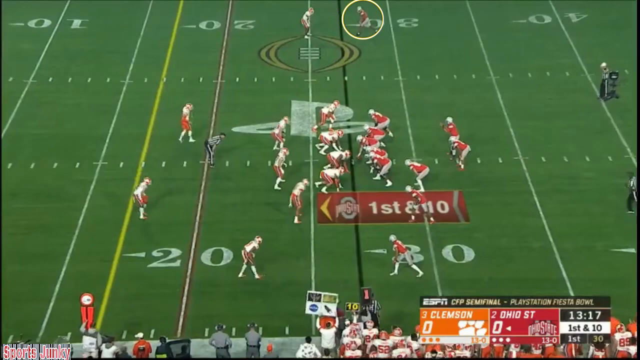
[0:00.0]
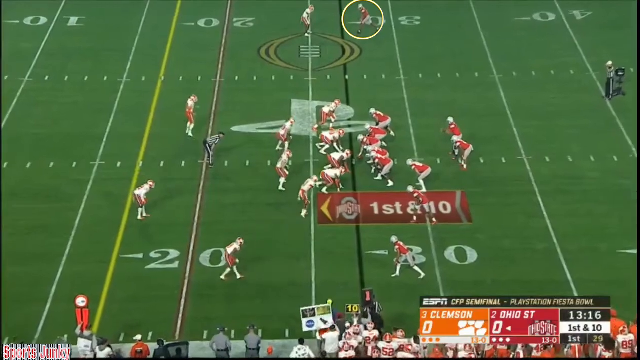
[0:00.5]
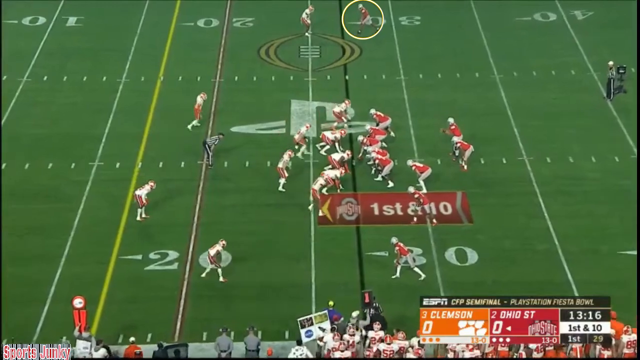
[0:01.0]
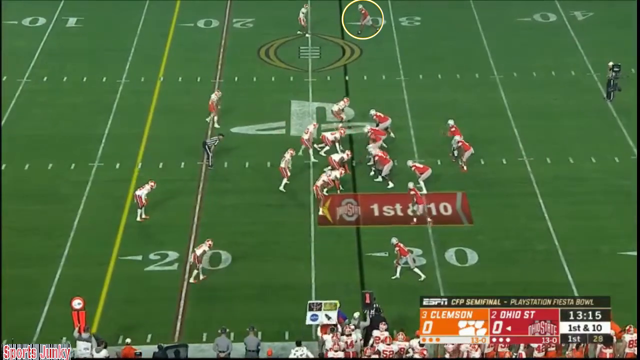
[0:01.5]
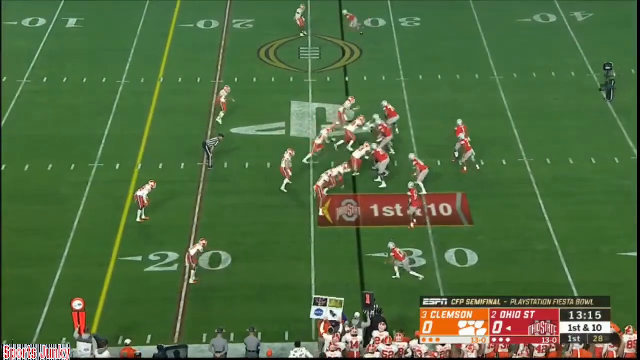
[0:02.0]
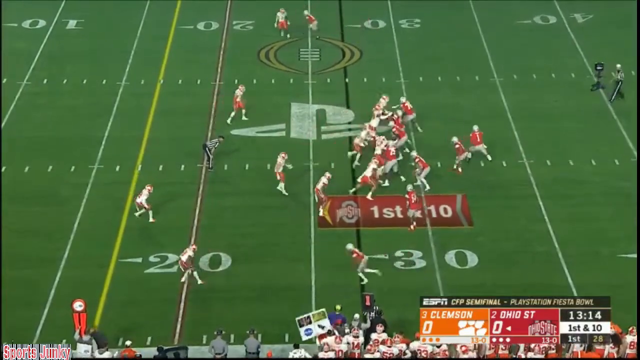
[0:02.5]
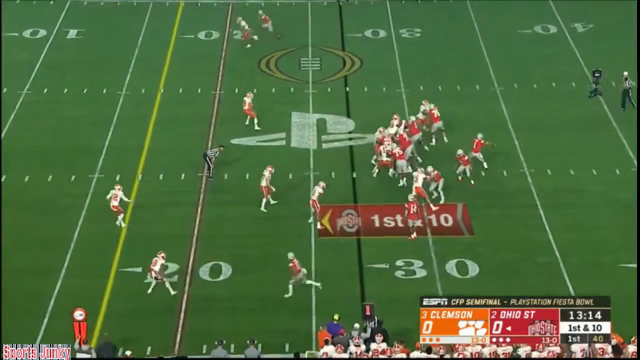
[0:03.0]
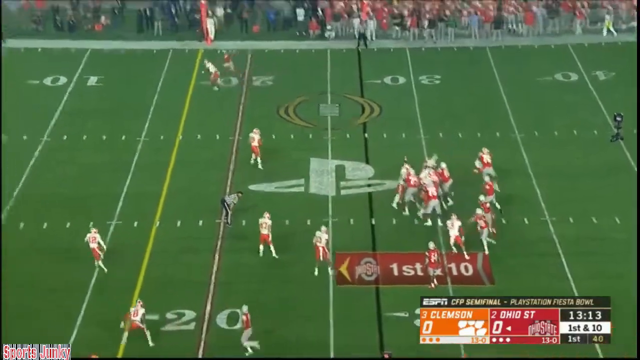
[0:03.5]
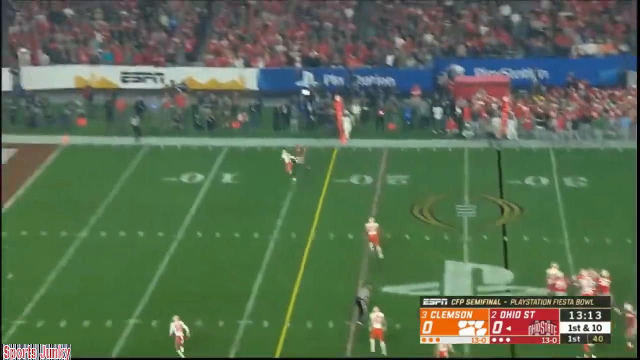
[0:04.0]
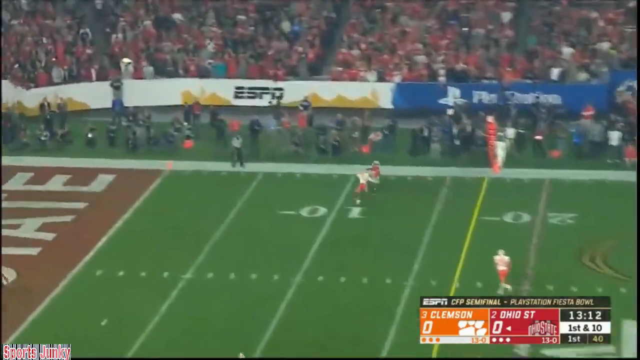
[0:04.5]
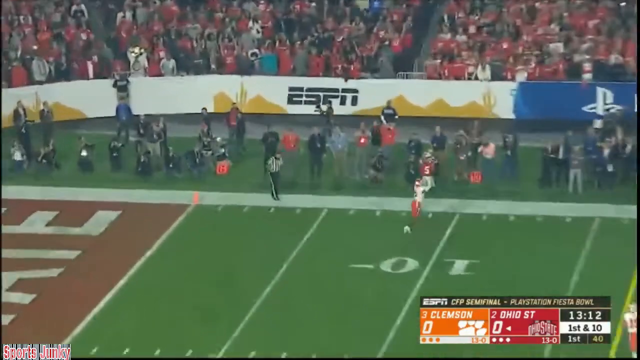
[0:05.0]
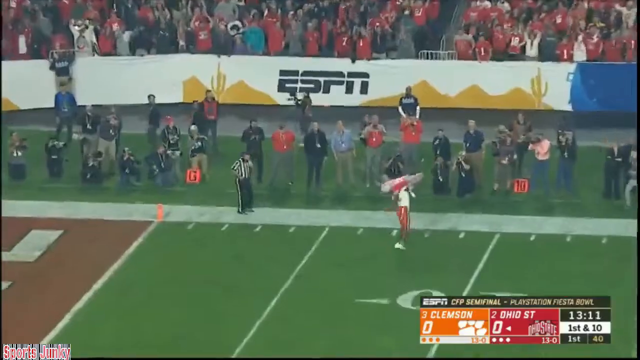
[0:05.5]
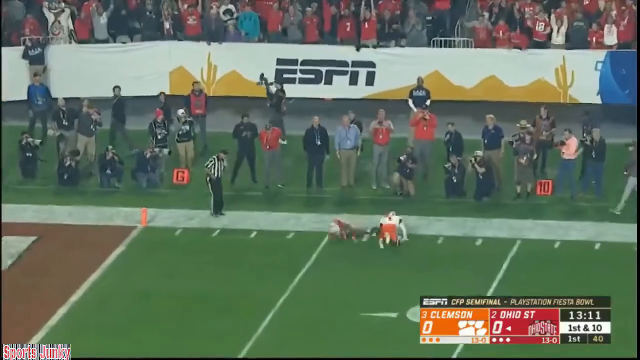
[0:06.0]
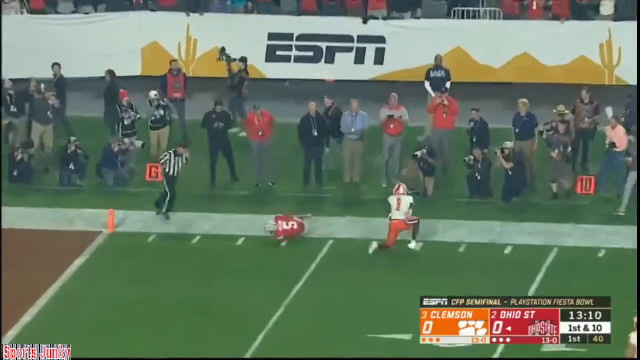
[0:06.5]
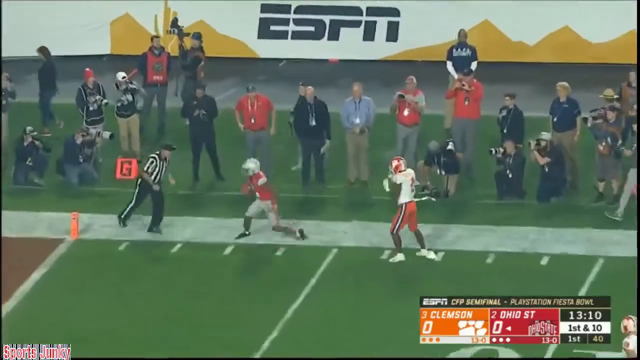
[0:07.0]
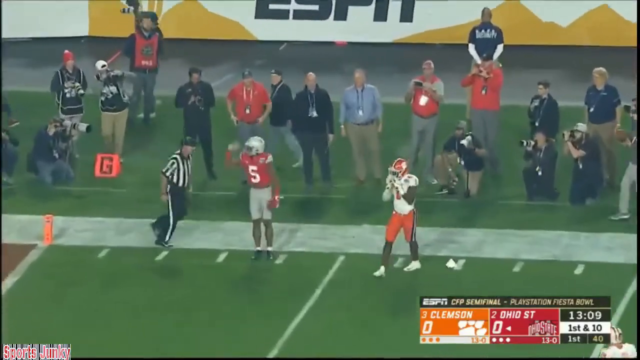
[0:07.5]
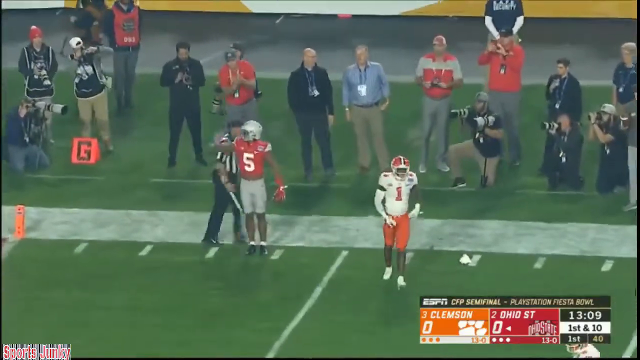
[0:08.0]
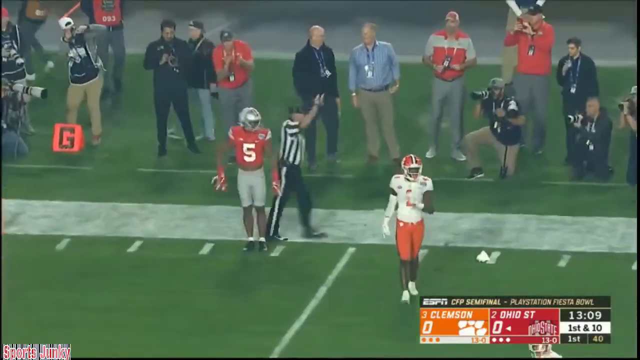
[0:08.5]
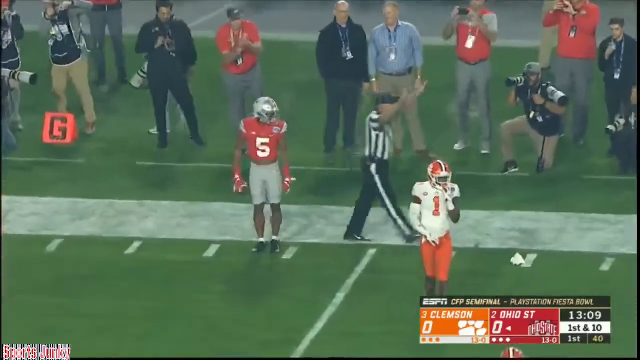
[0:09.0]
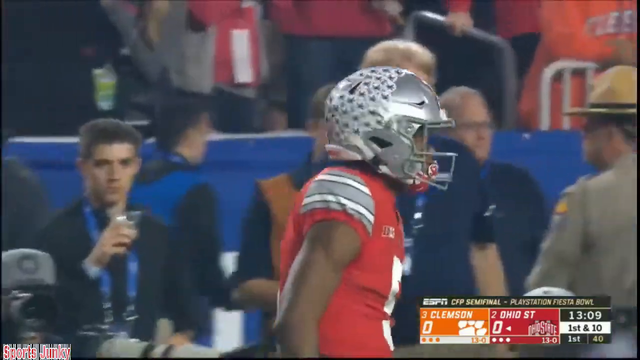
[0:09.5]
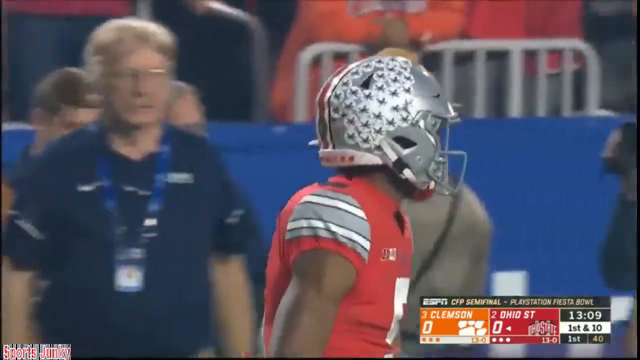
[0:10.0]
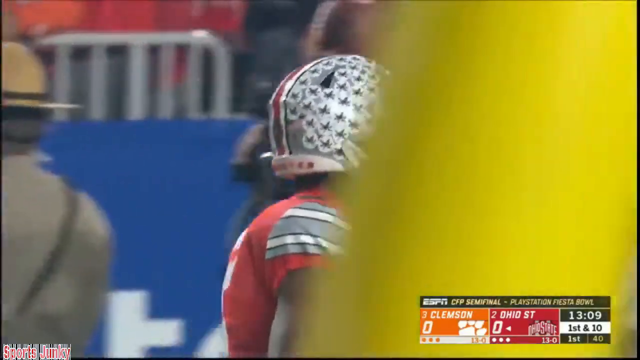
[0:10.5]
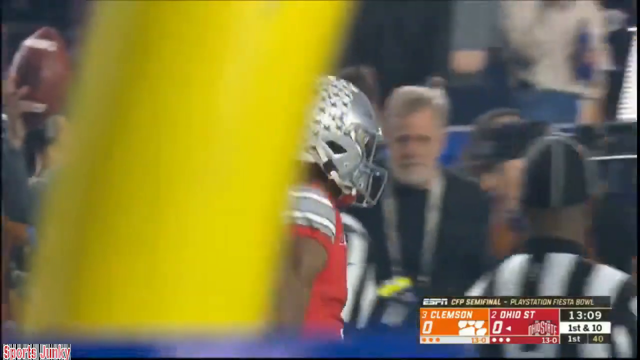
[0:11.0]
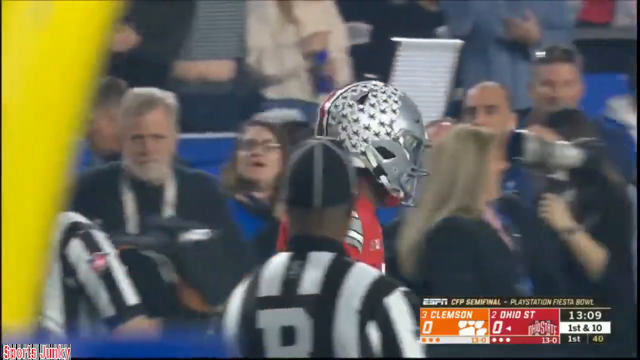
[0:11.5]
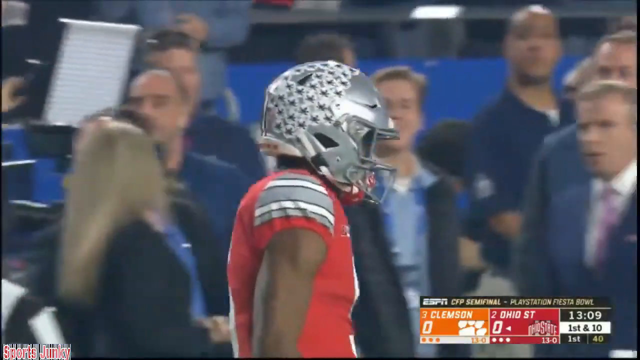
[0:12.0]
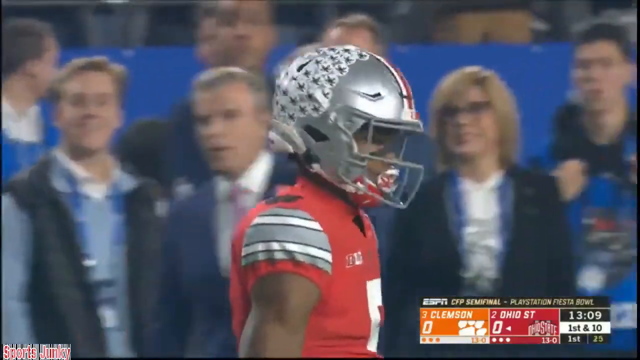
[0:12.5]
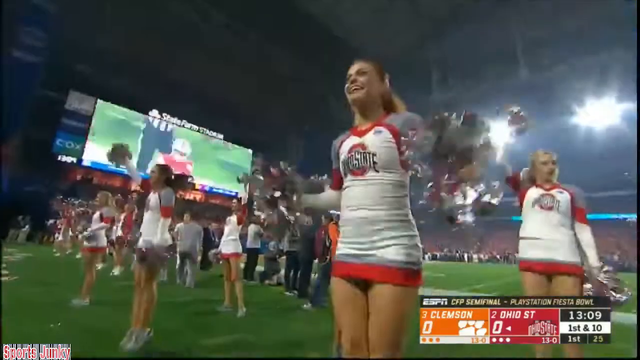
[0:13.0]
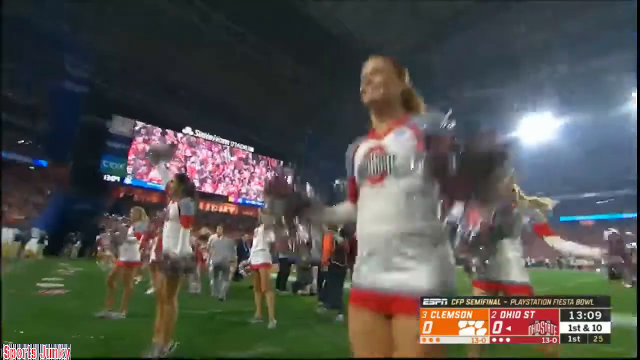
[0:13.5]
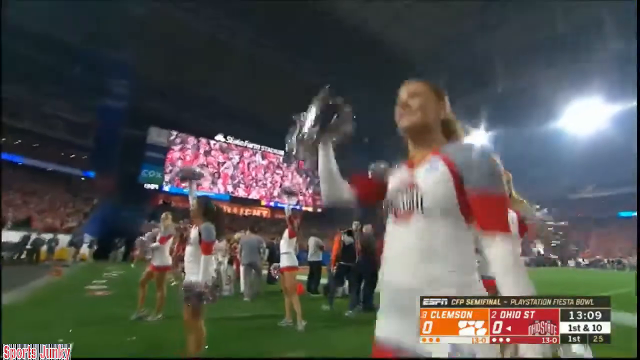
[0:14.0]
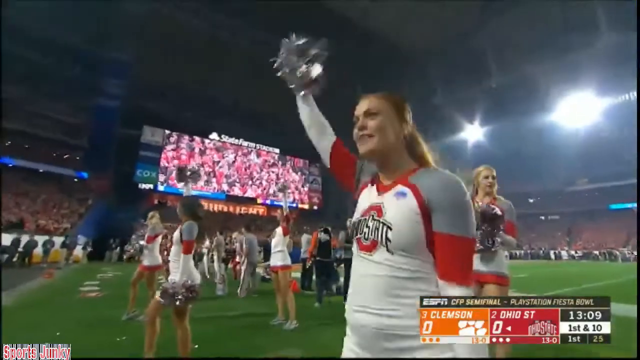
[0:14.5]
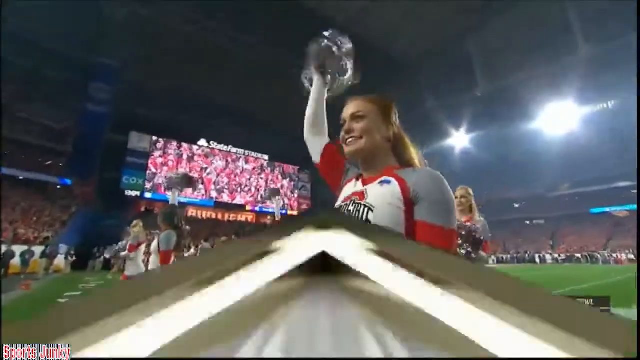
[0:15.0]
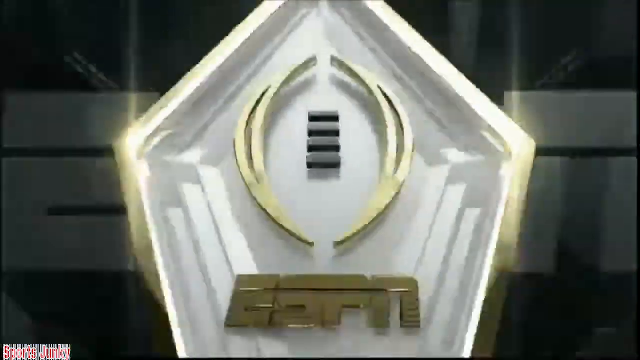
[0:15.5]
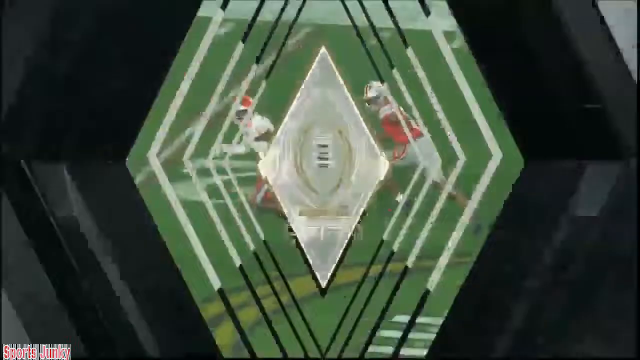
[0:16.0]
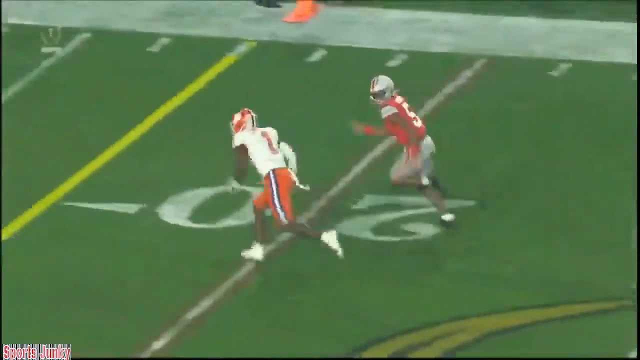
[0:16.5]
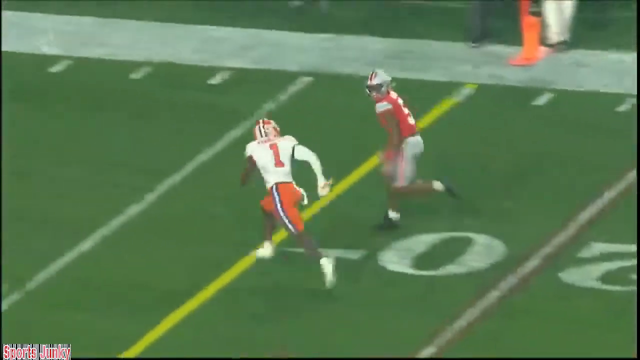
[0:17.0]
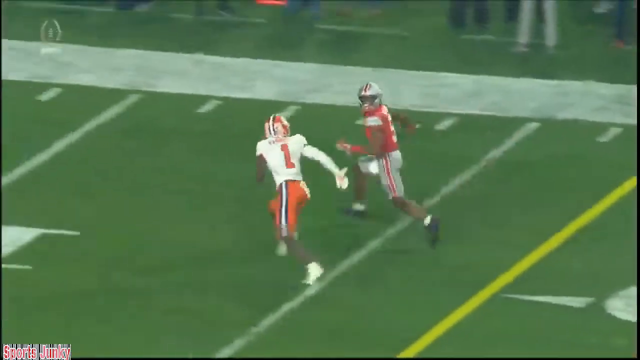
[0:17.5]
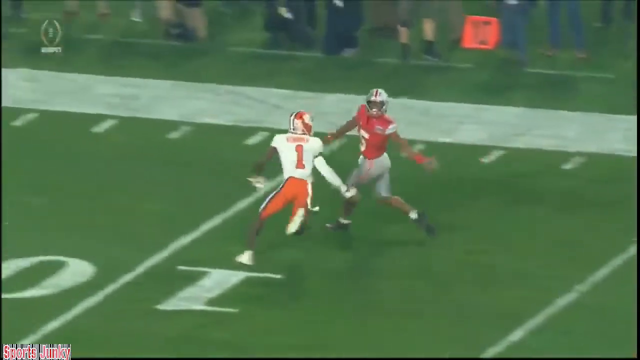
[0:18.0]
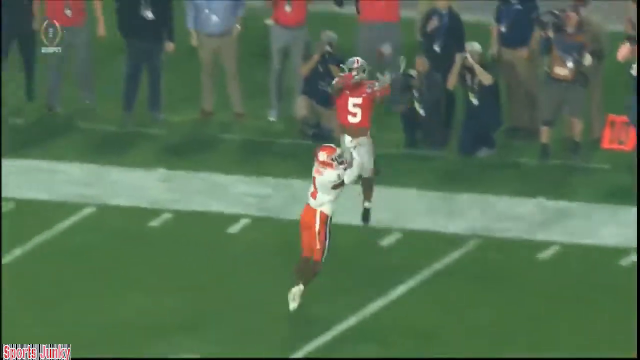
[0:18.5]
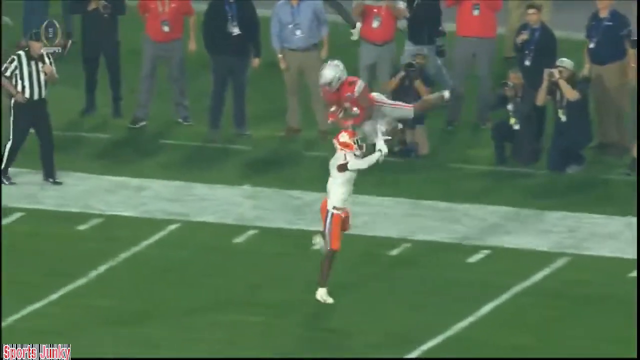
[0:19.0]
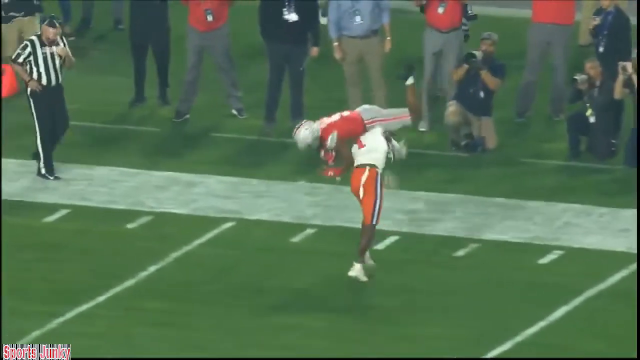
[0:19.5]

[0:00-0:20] A college football playoff semifinal, the PlayStation Fiesta Bowl on ESPN, between number three Clemson and number two Ohio State, has just started, with the score 0 to 0. Ohio State has the ball, first and 10 on the 30 yard line, with 13 minutes and 17 seconds left in the first half; Ohio State has the ball on the Clemson 27 yard line. Ohio State wears red jerseys, gray pants and white helmets, while Clemson wears white jerseys and orange pants. The quarterback throws to number five down the right sideline, who makes a leaping catch inbounds for the first down. A replay is shown.